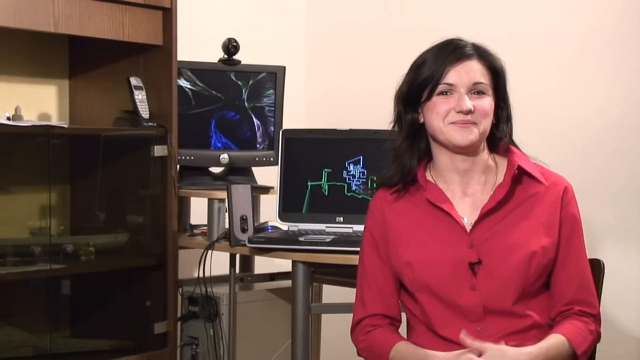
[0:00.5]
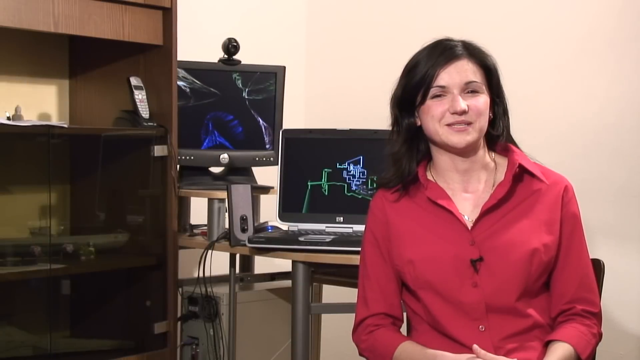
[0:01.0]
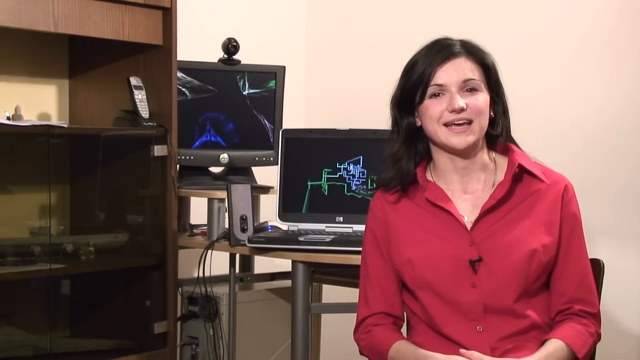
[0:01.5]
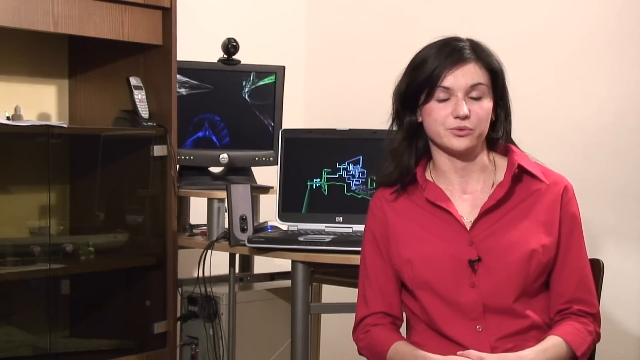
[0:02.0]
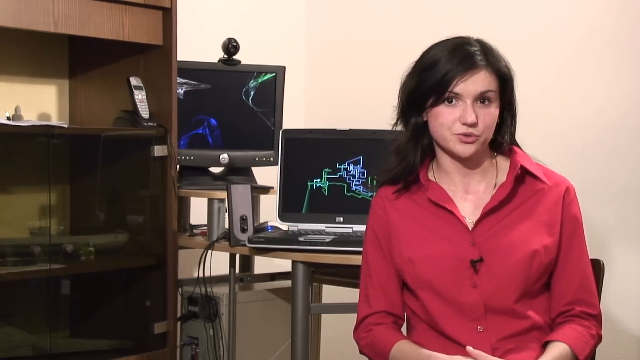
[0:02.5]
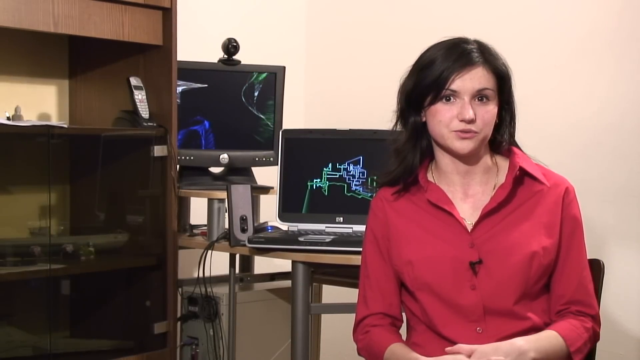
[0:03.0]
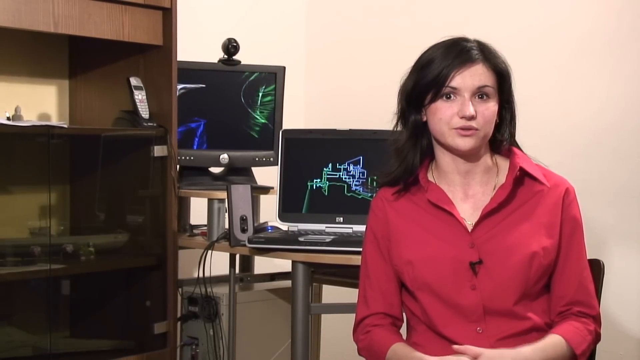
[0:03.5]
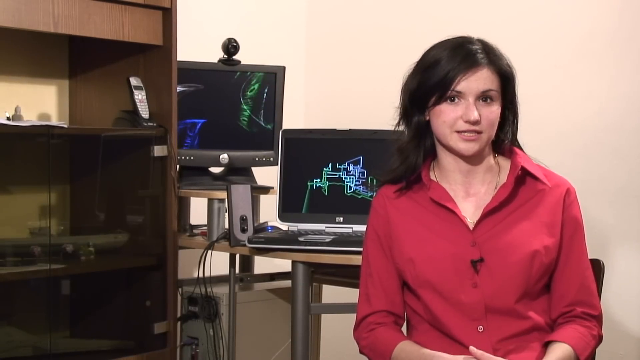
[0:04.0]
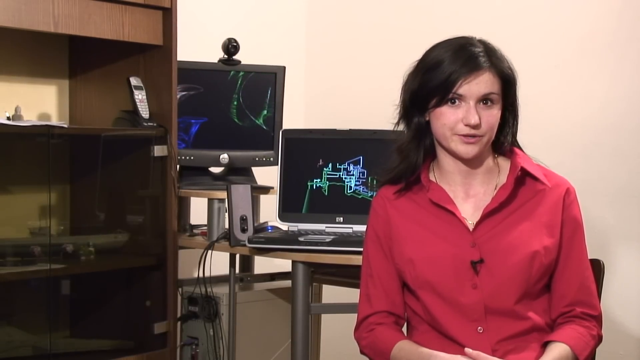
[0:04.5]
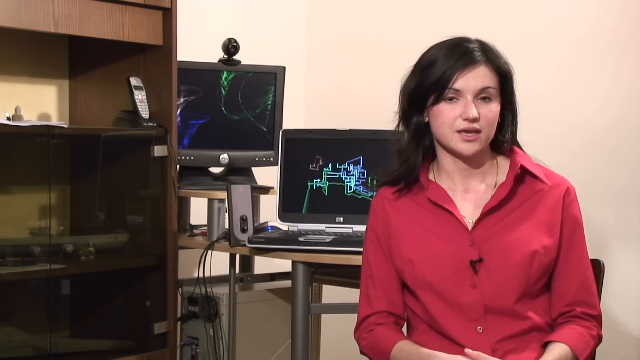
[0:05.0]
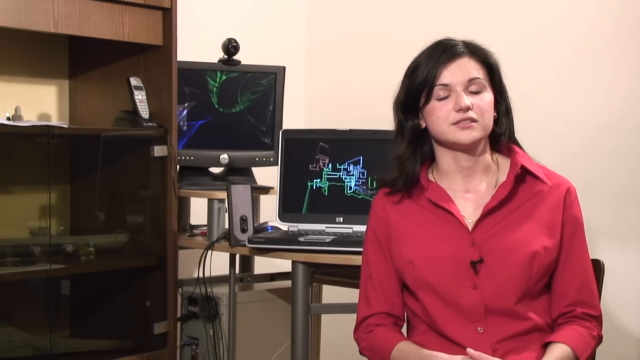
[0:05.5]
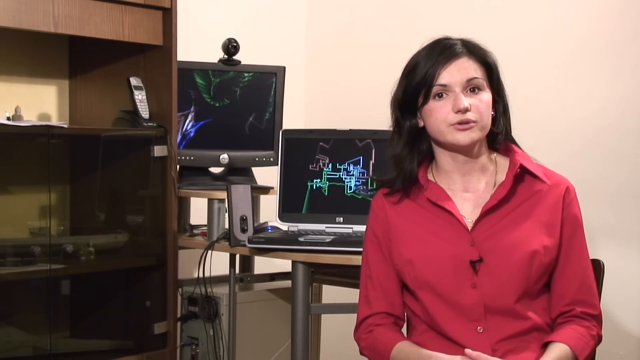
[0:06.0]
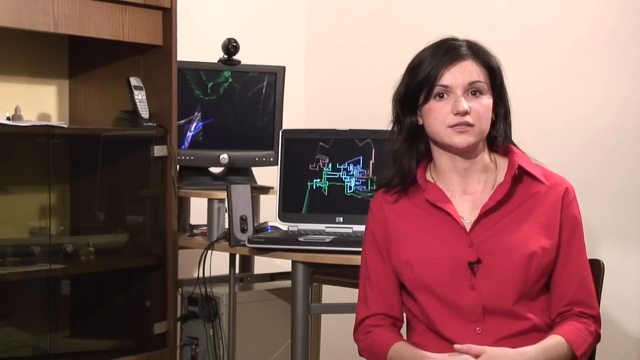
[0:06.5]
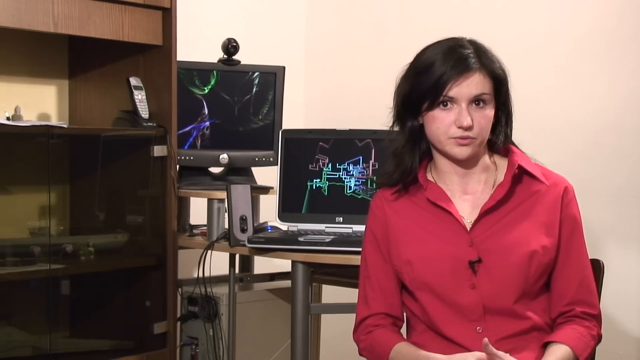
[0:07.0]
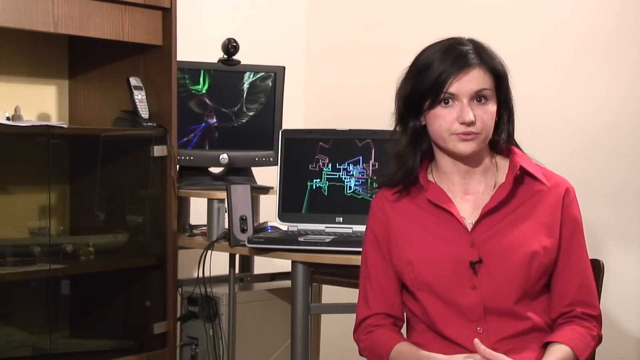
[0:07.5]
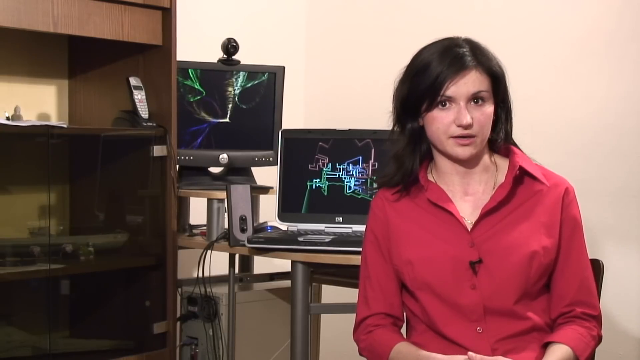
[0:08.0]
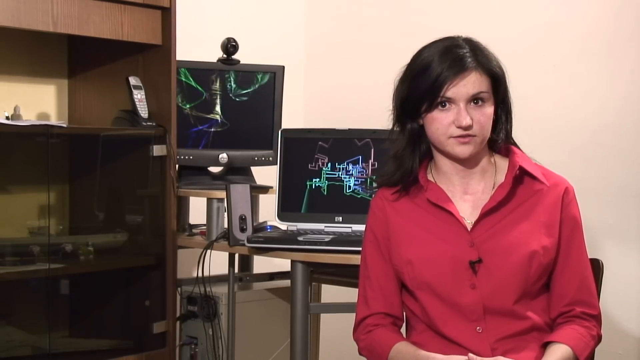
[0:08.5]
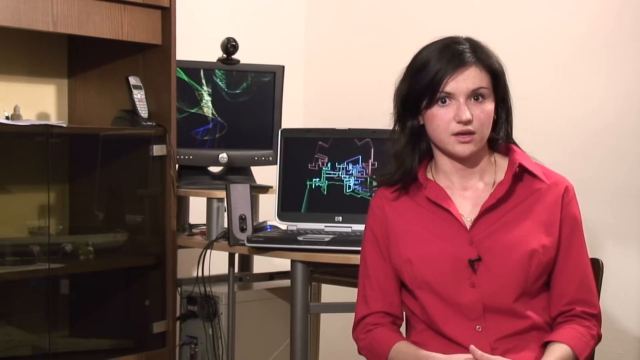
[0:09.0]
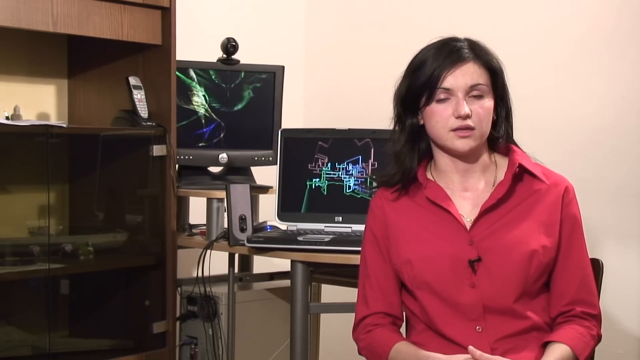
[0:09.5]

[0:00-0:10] A young woman, probably between the ages of 19 and 25, wears a darkish pinkish-magenta shirt. Behind her are several older-style computers and an older home phone; one computer has a webcam on it, and the other has a keyboard in front of it. A dresser and a desk are also behind her. She seems to be talking about something specific.